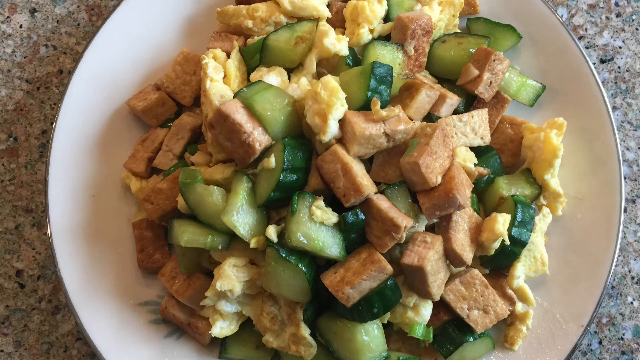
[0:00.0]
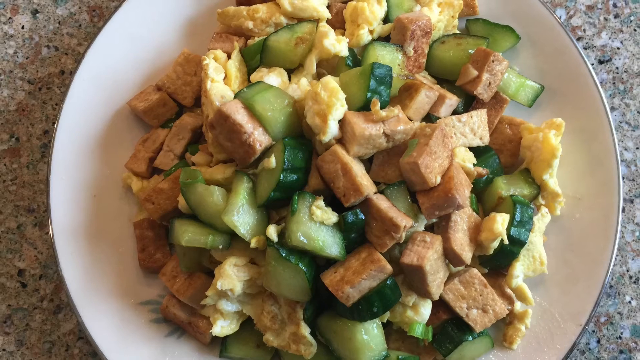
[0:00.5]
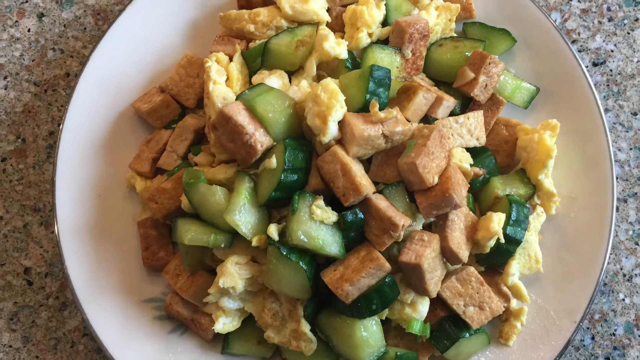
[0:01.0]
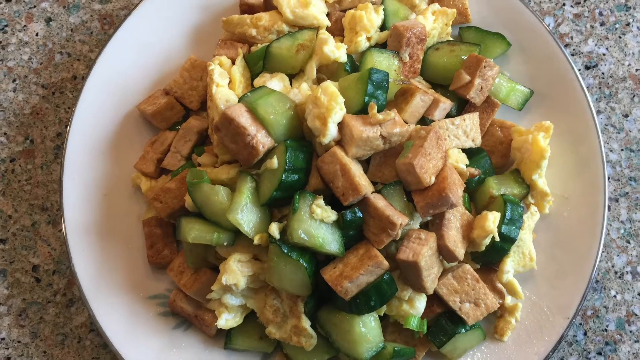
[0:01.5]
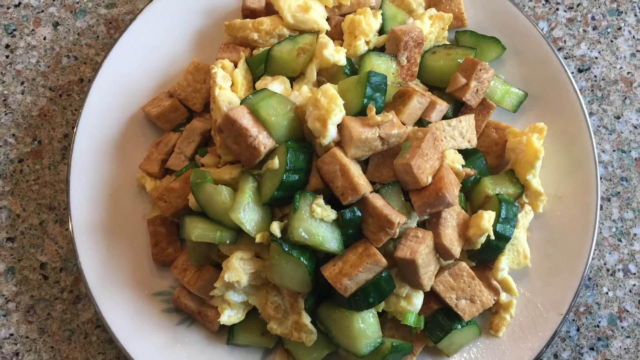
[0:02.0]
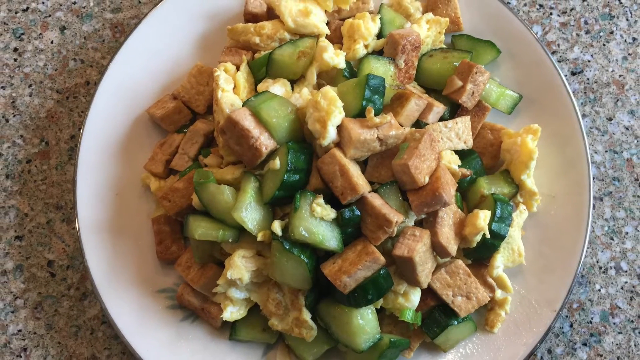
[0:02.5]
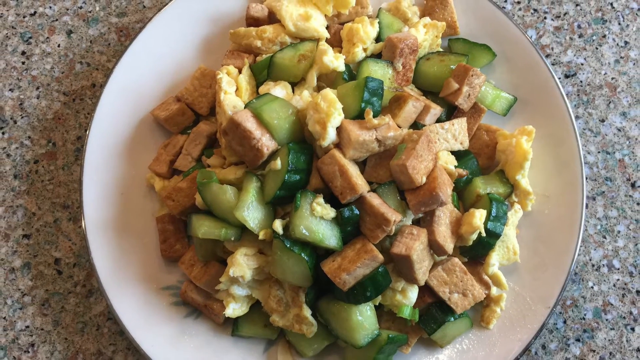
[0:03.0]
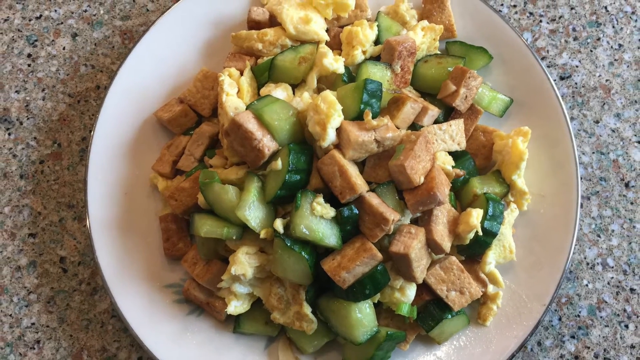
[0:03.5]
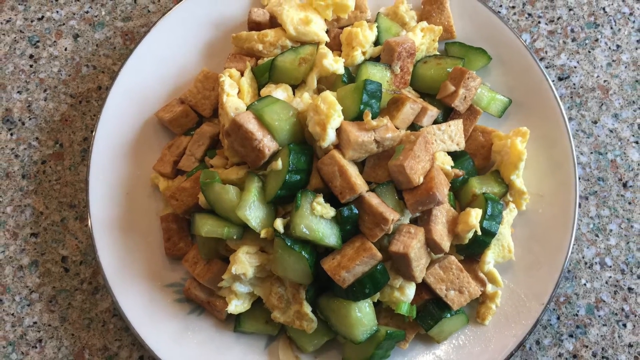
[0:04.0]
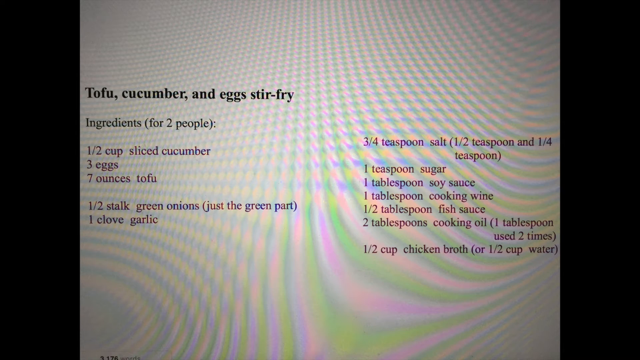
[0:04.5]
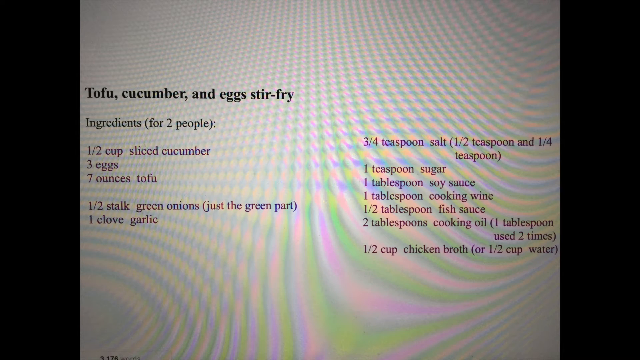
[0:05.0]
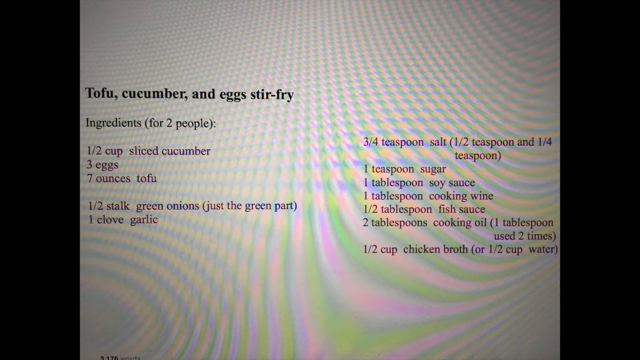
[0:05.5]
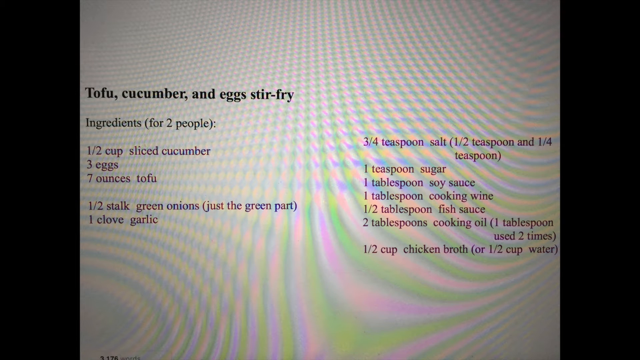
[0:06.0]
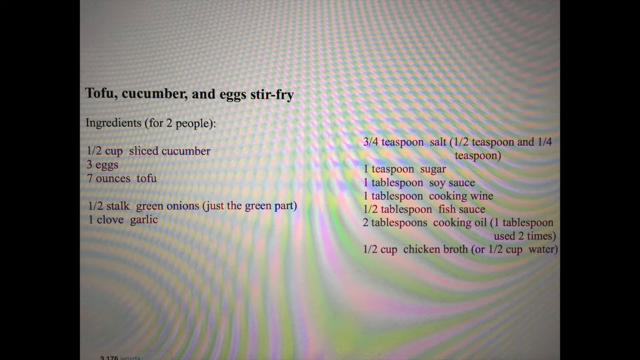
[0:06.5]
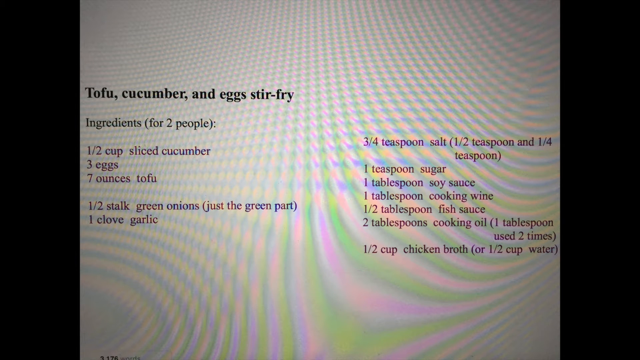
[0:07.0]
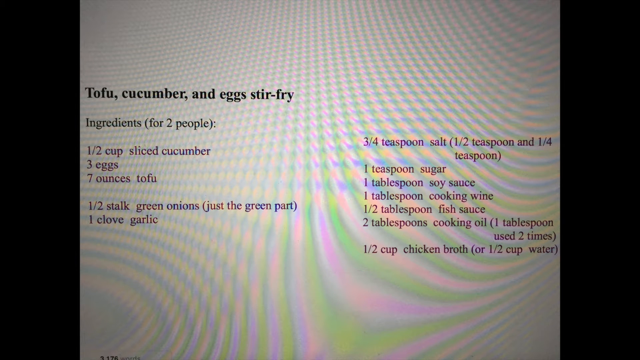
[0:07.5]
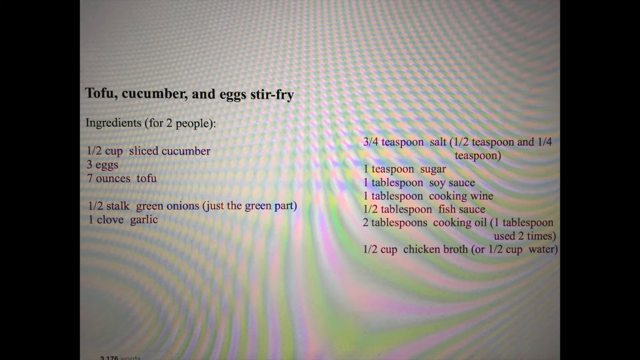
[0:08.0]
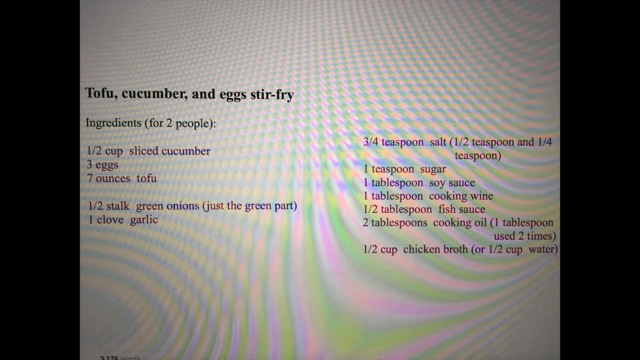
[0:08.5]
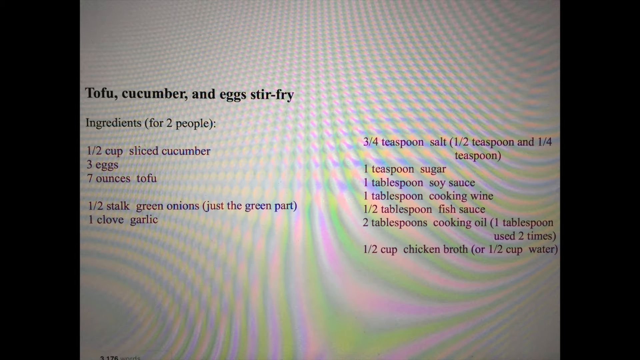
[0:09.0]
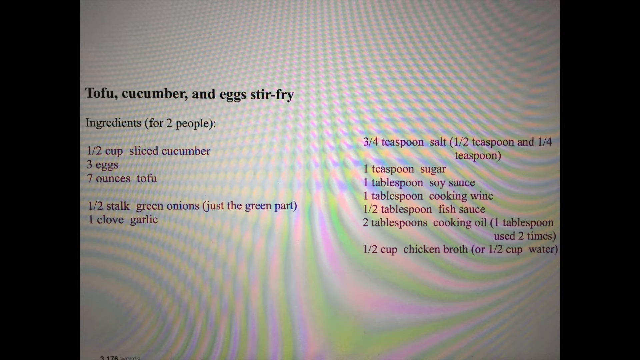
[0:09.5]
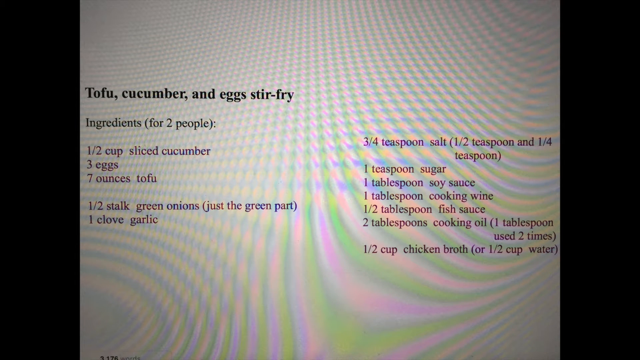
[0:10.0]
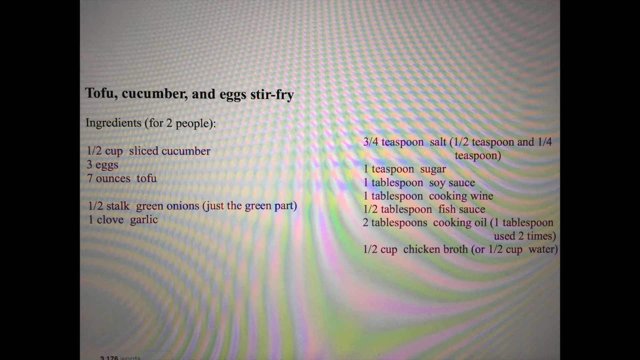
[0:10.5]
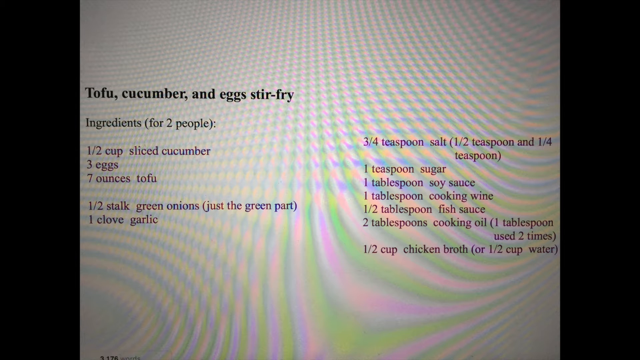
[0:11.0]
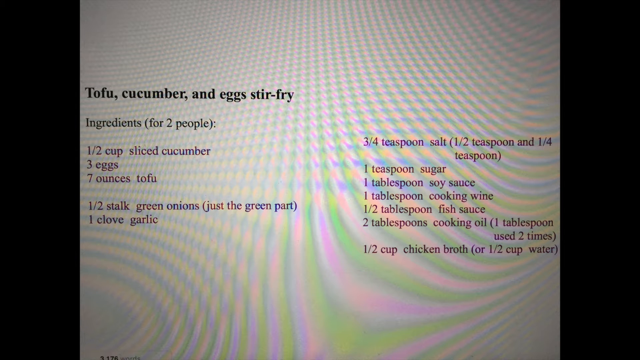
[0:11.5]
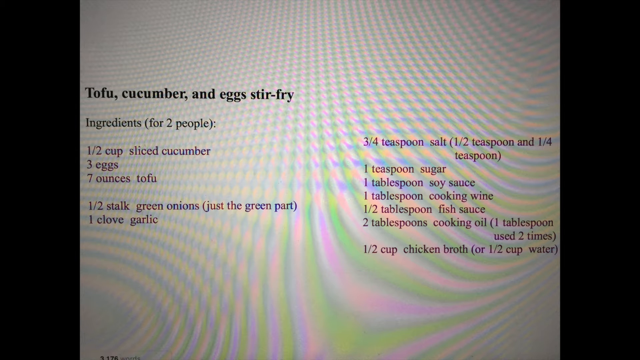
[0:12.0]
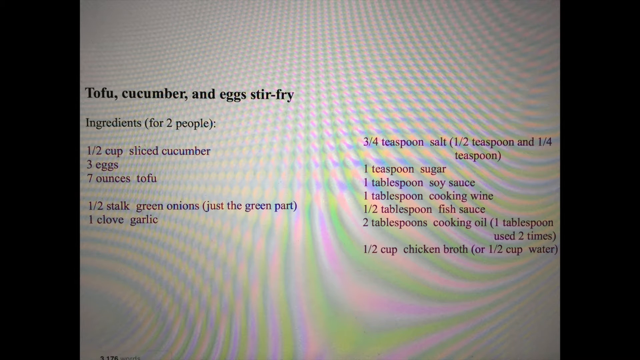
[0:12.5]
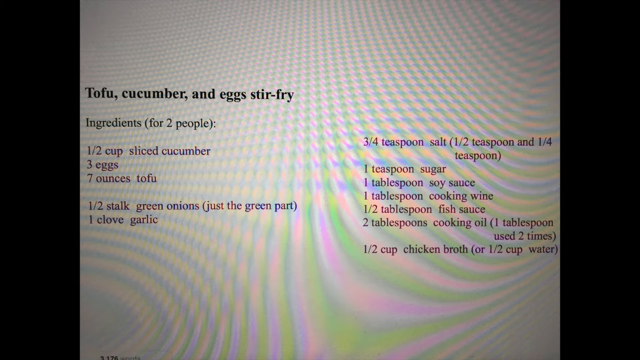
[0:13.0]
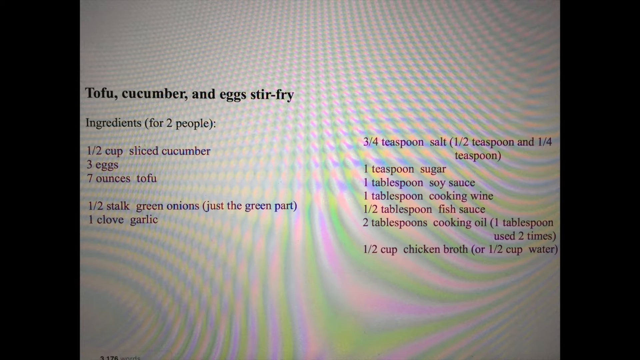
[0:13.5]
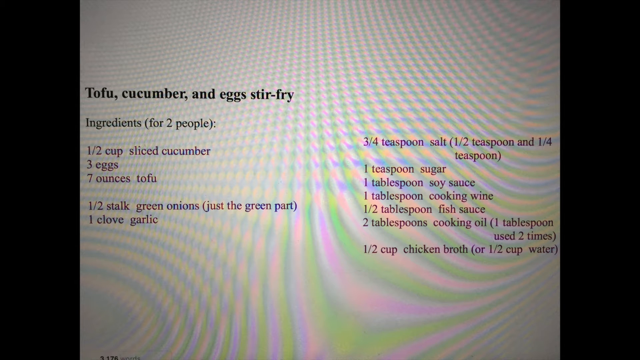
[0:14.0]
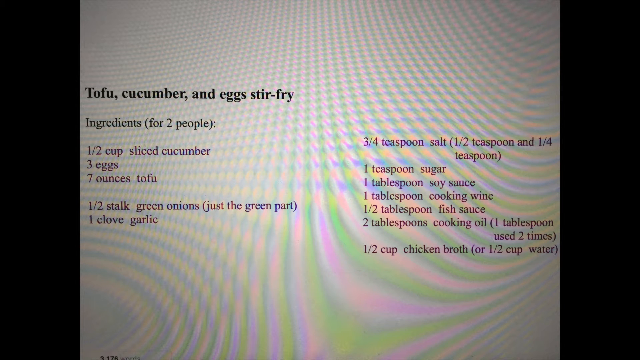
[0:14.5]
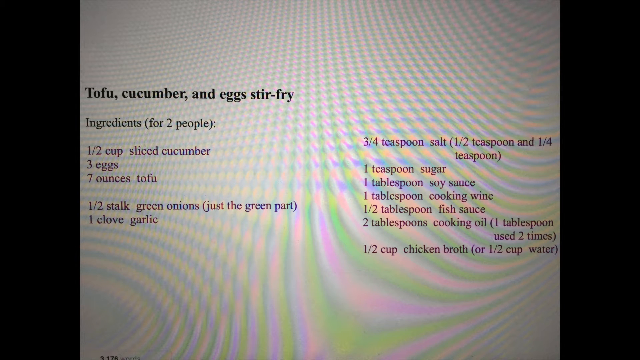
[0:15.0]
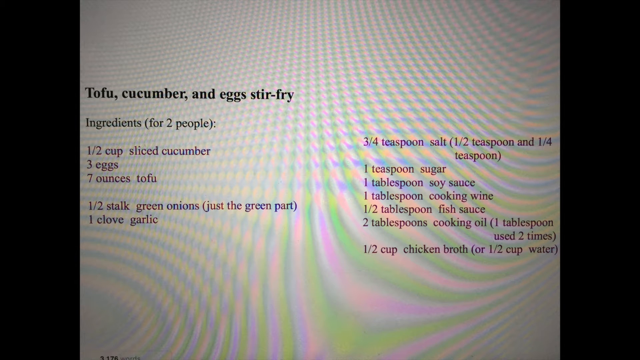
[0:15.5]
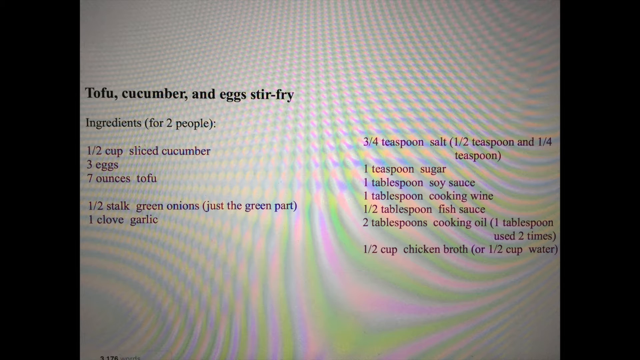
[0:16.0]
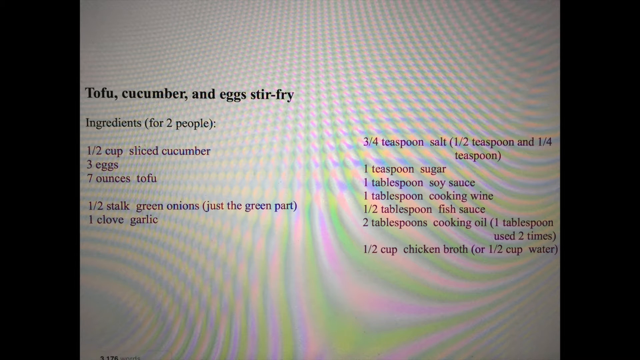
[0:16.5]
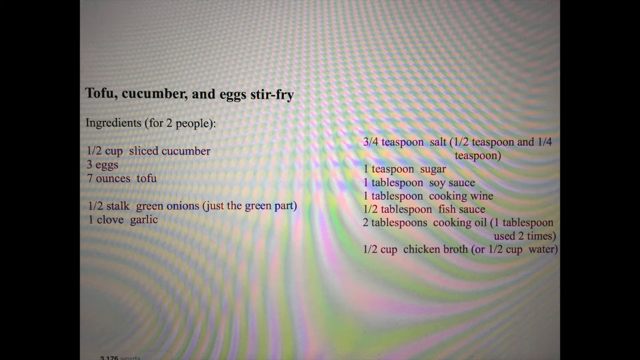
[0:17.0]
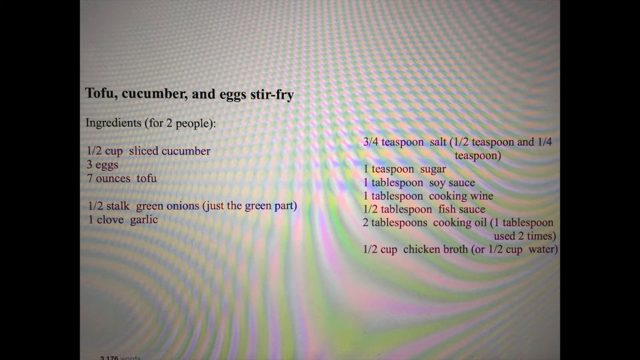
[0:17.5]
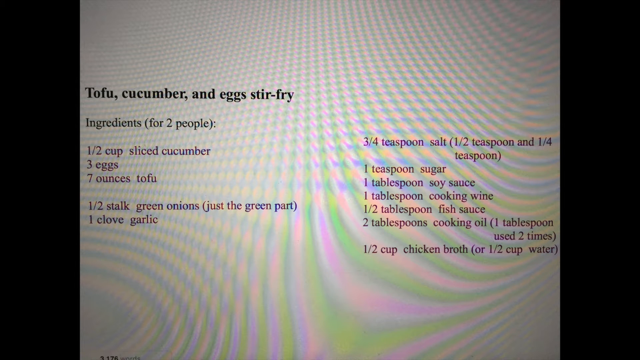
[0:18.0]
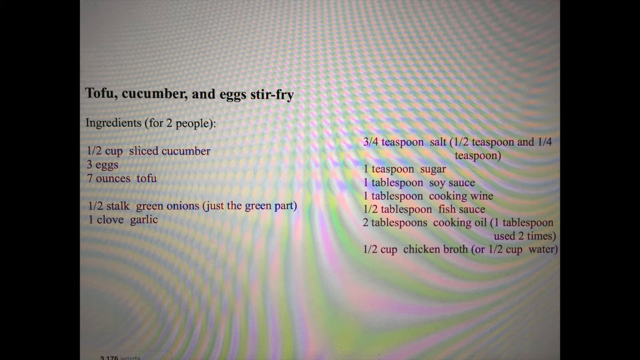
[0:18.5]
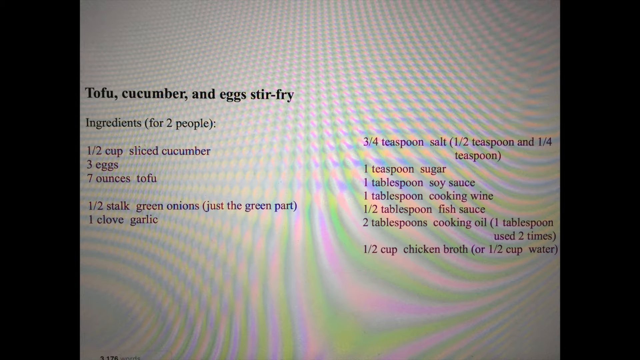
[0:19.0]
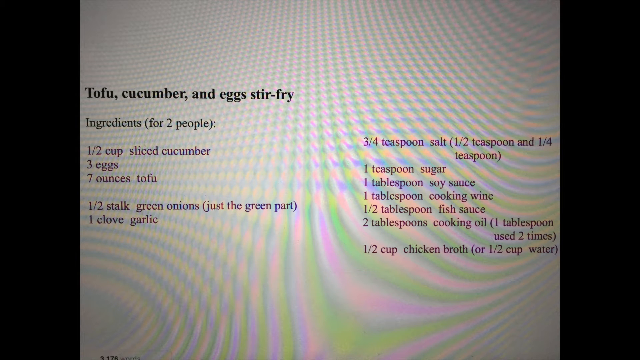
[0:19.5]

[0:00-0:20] There are black bars to the left and right of the picture. A bowl or plate holds what looks like various eggs, something almost like cubed meat, maybe cubed potatoes, though it is hard to tell, and what appear to be diced green vegetables, maybe zucchini, all piled up in an assorted way. The camera zooms out a little. The dish appears to be on a granite top, speckled with grays and blacks as well as some whitish and orange. The video then moves to what can be seen is a screenshot of a computer screen that looks like a recipe. Indented a few spaces, in bold, it says "tofu, cucumber, and egg stir fry". Underneath is "ingredients for two people", listing cucumbers, eggs, tofu, green onions and garlic. Another column lists juices and things needed, such as sugar, soy sauces and a few others. Swirl marks surround the text: at the top left they look almost checkered all the way across, and toward the center and lower down they curve. The lines are almost green, alternating green and pink.